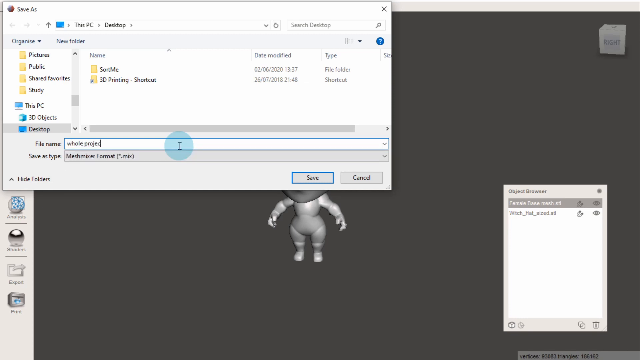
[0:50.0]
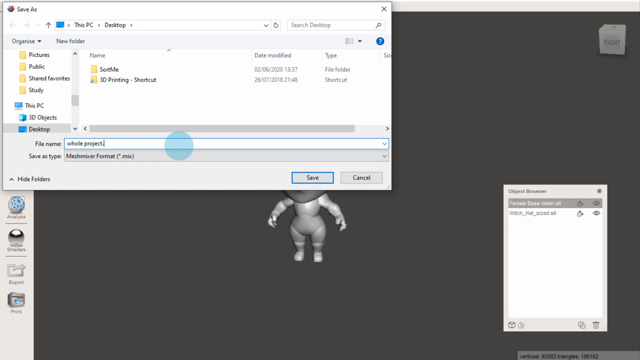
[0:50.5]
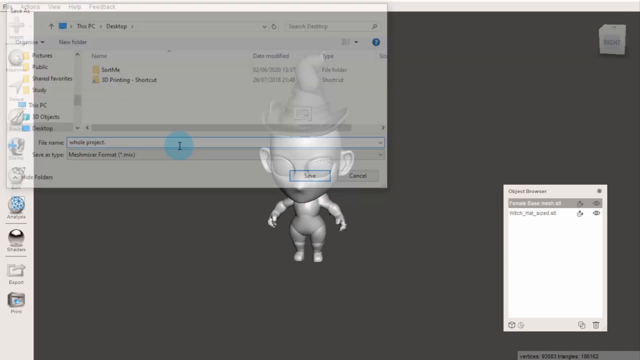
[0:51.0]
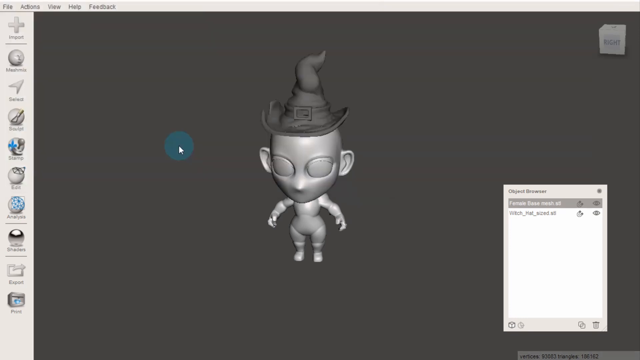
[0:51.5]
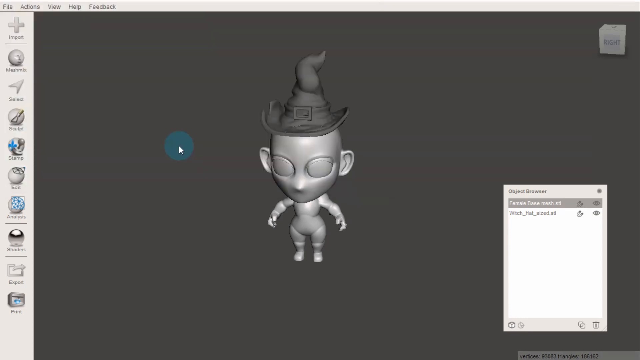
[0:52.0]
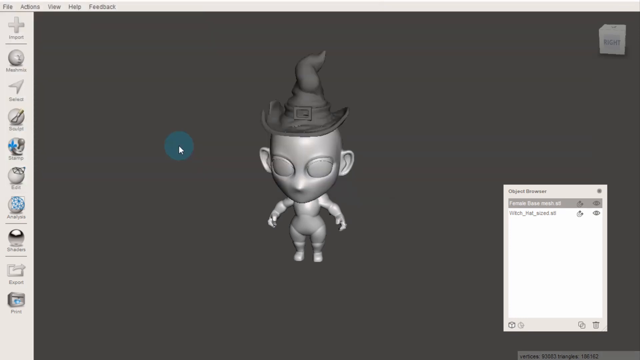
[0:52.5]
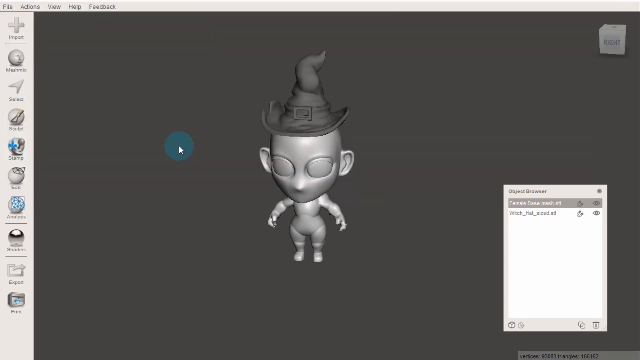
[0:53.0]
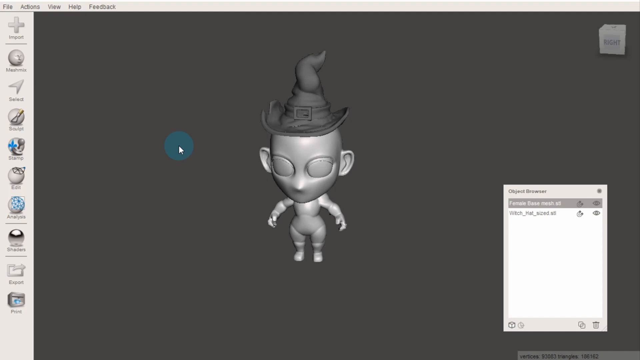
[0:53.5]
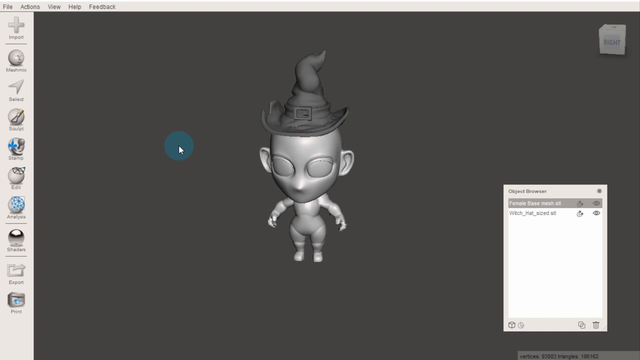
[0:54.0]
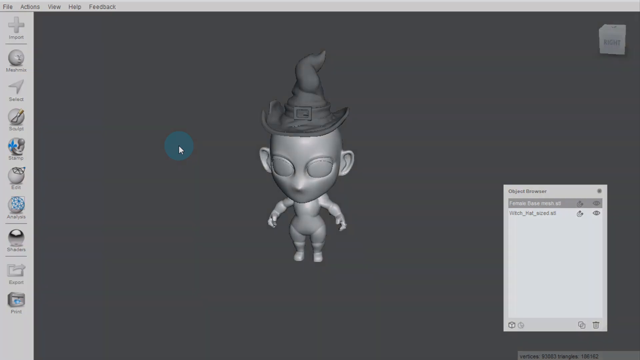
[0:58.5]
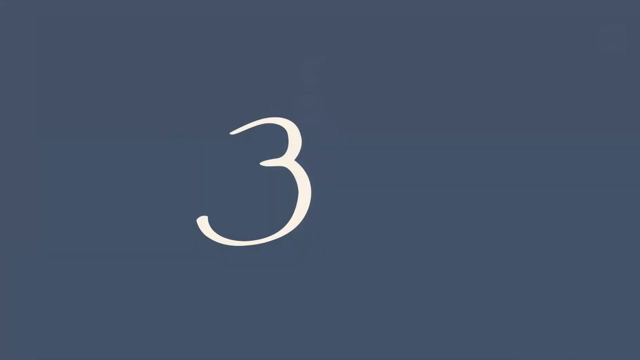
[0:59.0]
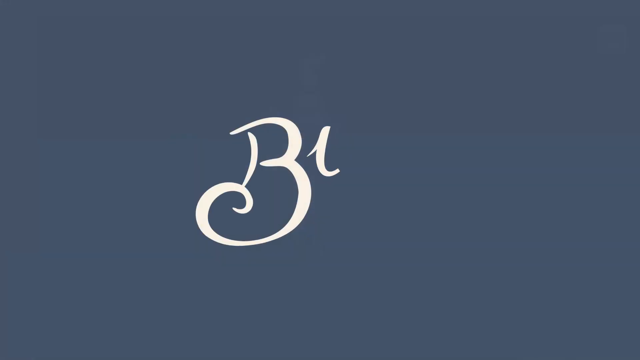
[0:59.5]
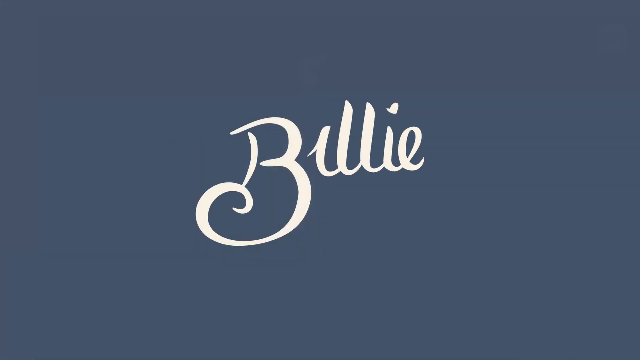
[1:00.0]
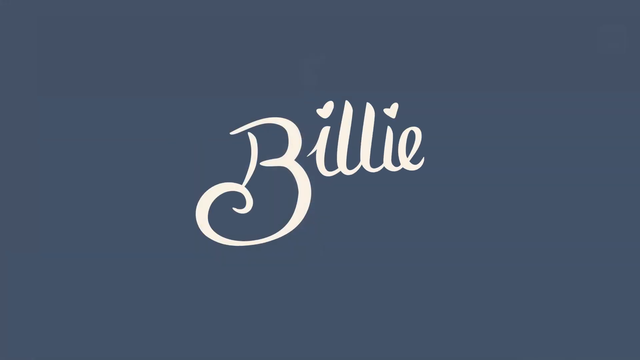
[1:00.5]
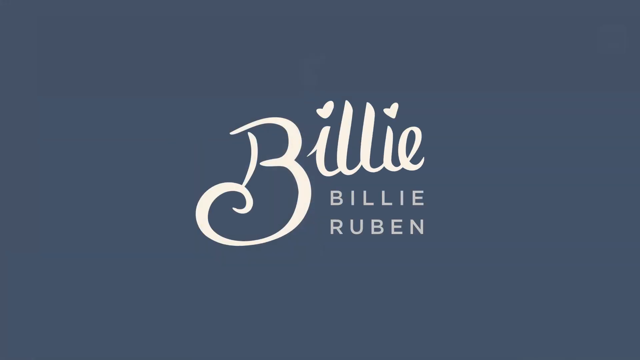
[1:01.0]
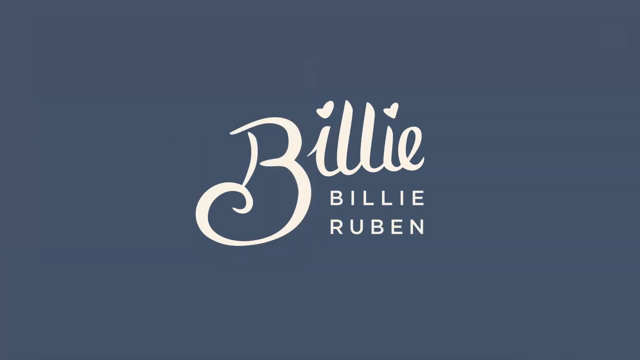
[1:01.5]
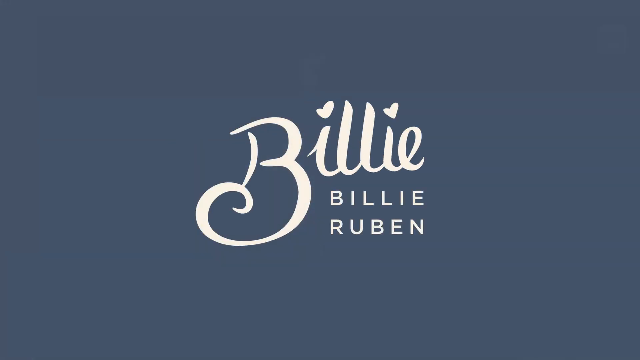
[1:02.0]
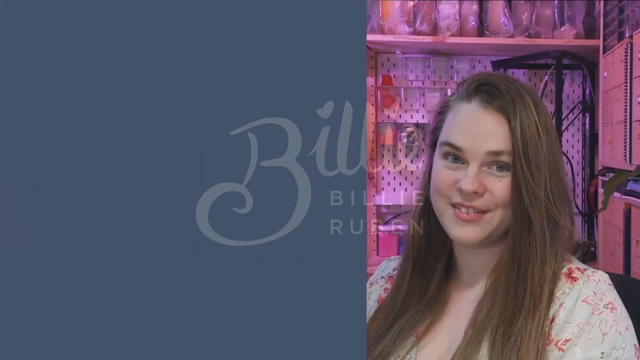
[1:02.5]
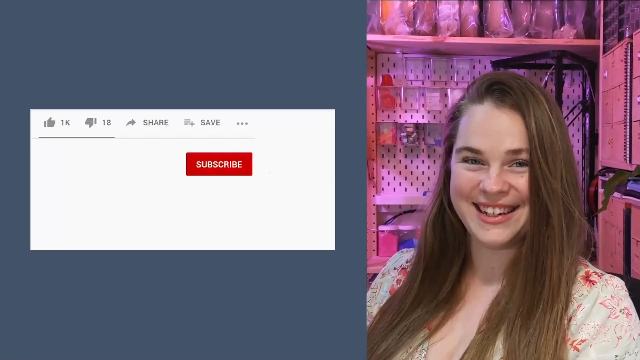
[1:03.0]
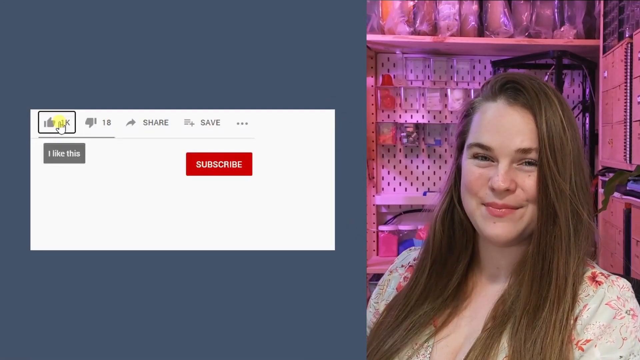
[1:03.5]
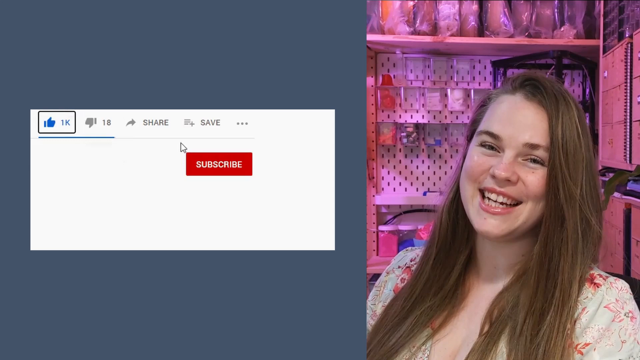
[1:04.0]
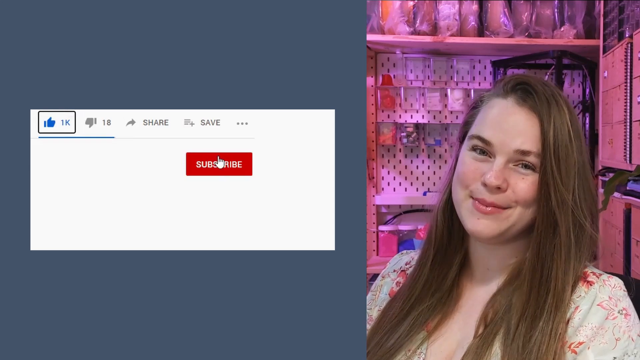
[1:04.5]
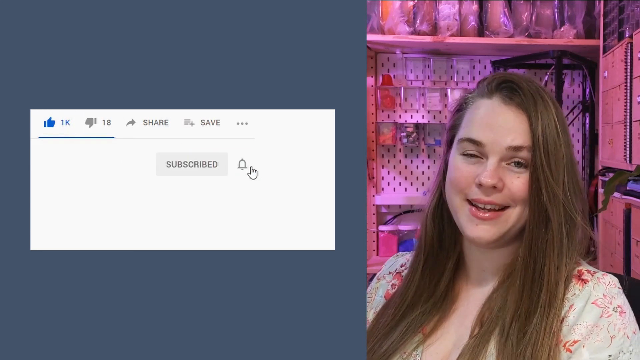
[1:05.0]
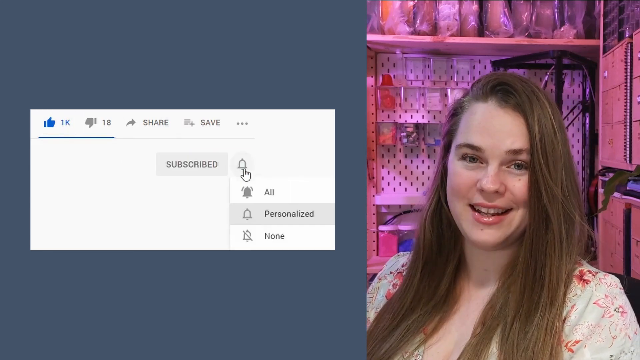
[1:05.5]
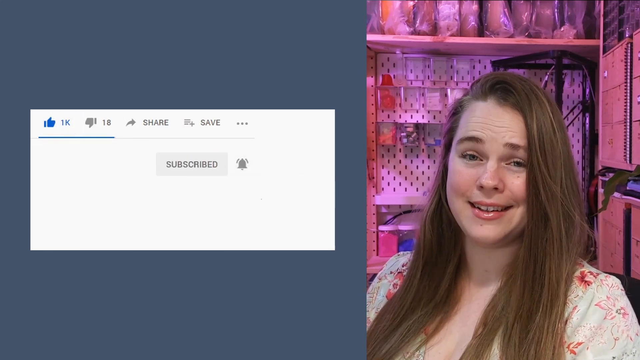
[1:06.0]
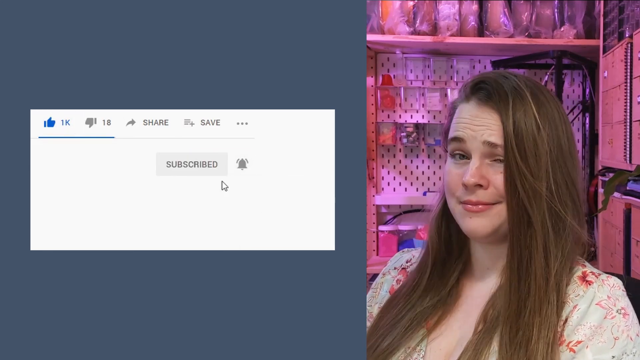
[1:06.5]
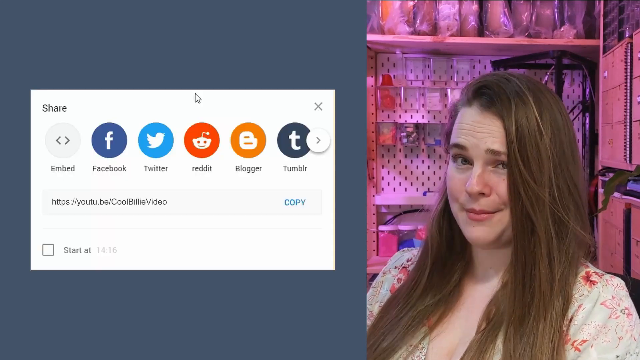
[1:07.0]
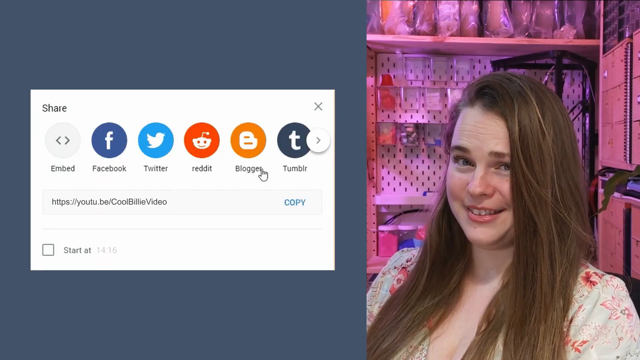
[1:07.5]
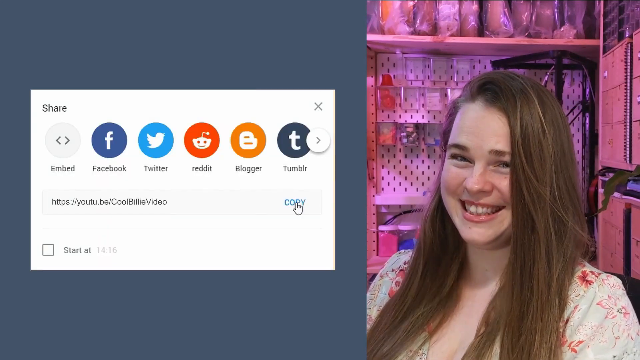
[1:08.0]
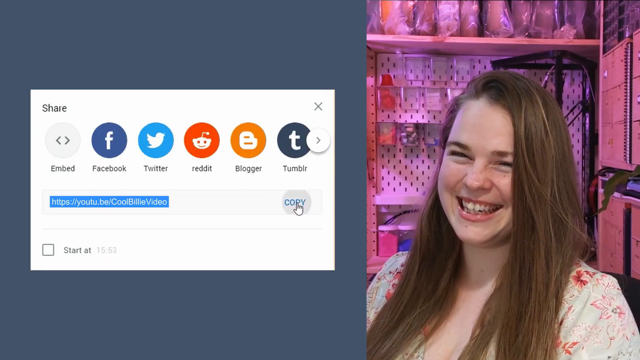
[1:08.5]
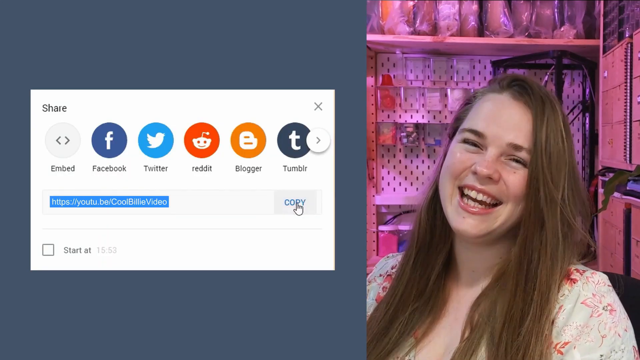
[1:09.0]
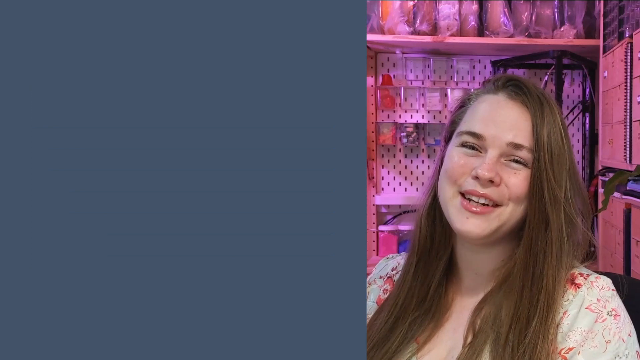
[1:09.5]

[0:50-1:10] A large white box with "Save As" at the top is open on a computer screen, over a larger image behind it that shows an animated figure in the center of the screen. The cursor is on the box, and someone types the words "Whole Project" in the file name box. The box disappears, revealing the complete animated figure, which looks like a small baby with a large head and indistinct facial features, wearing what looks like a witch's conical hat that is curved at the top and has a large buckle on the front. The image then disappears and the screen turns light blue, with the word "Billie" written in script; both i's are dotted with hearts. Below it, the name "Billie Rubin" appears in text. Next, a video of a woman appears on the right side of the screen; she is smiling and talking to the camera. On the left side, text boxes appear: one has a subscribe button that is clicked and a notification bell that is clicked, followed by a share box with icons for different social media.